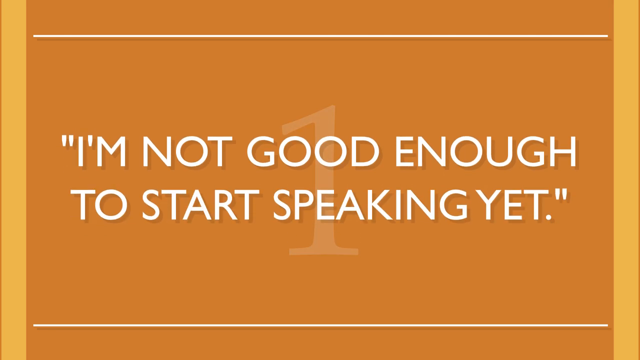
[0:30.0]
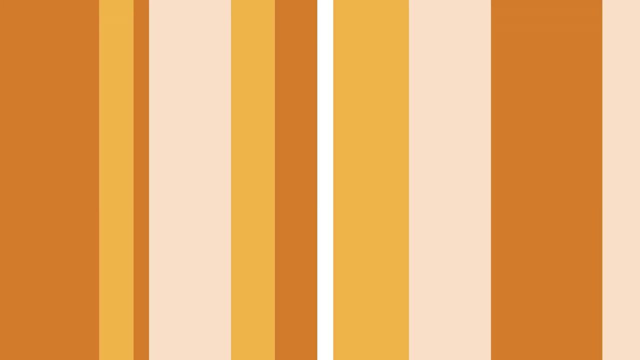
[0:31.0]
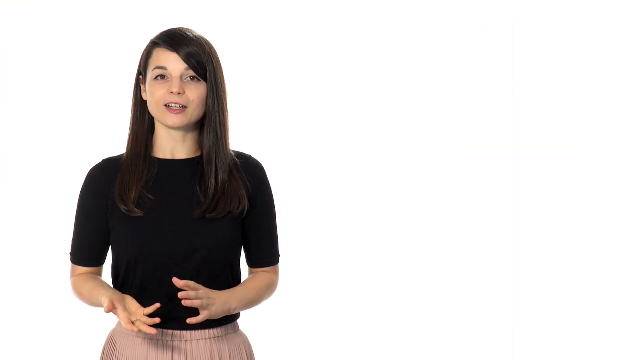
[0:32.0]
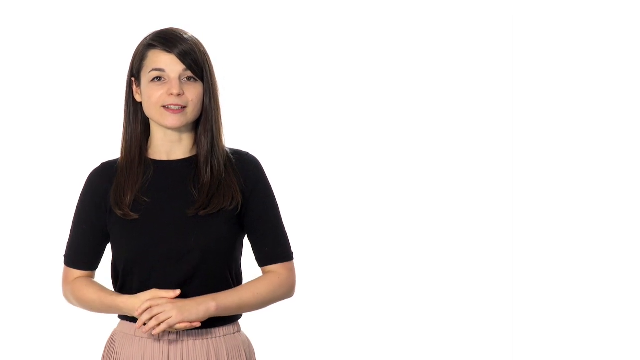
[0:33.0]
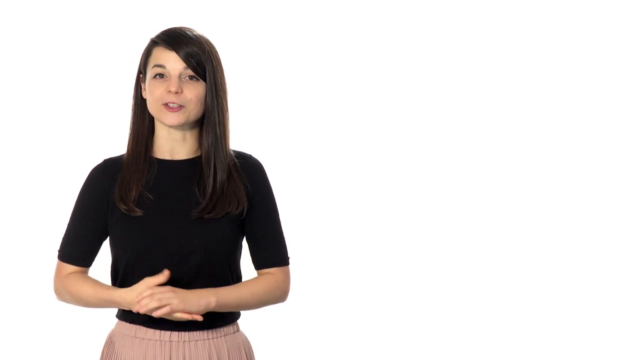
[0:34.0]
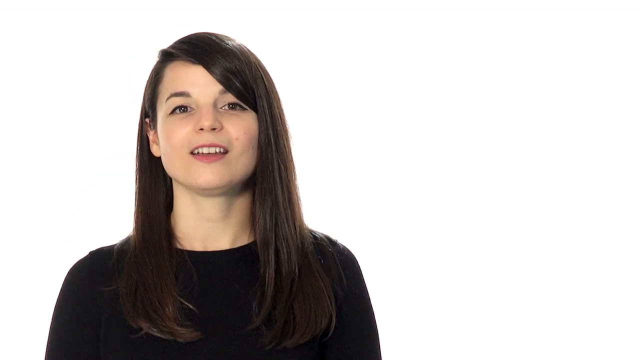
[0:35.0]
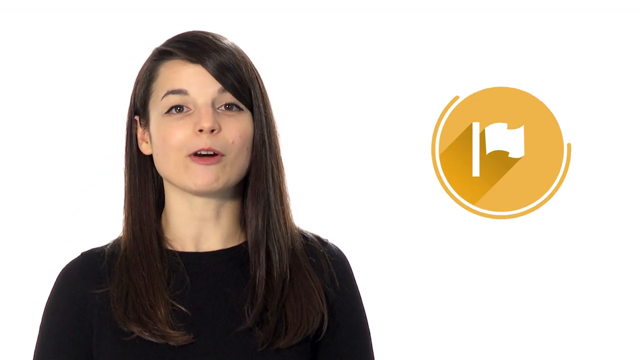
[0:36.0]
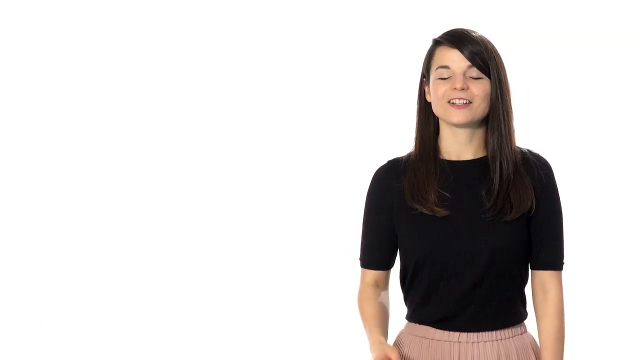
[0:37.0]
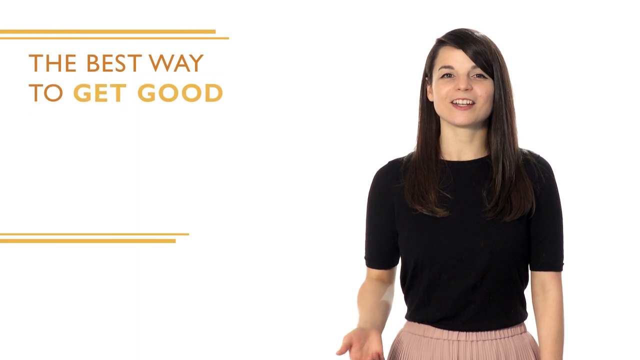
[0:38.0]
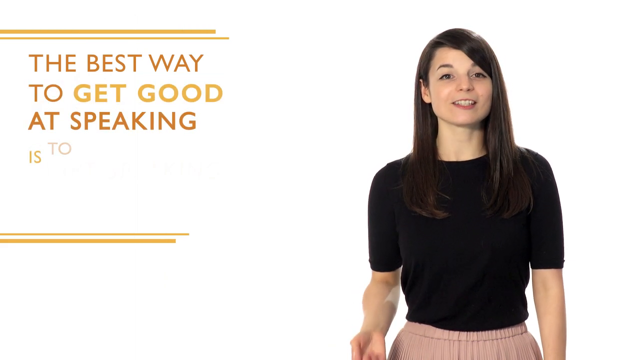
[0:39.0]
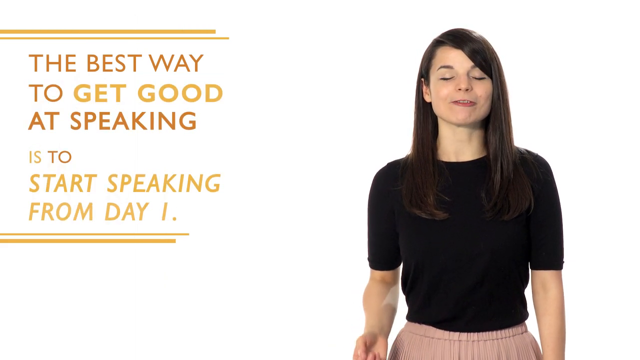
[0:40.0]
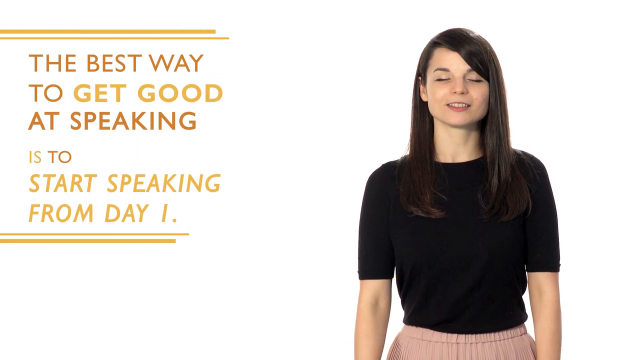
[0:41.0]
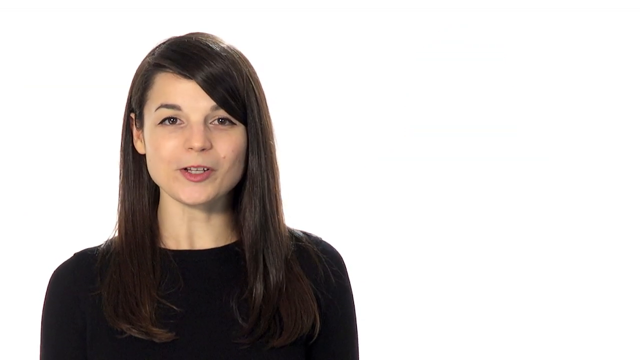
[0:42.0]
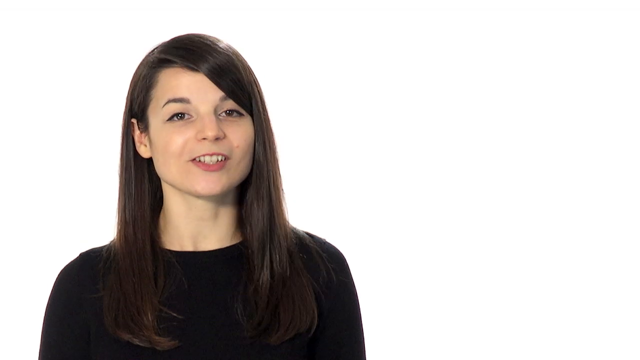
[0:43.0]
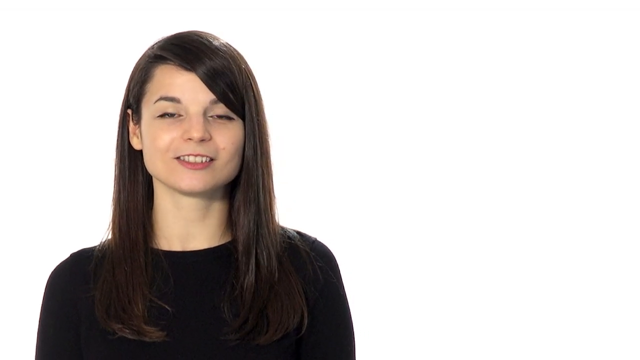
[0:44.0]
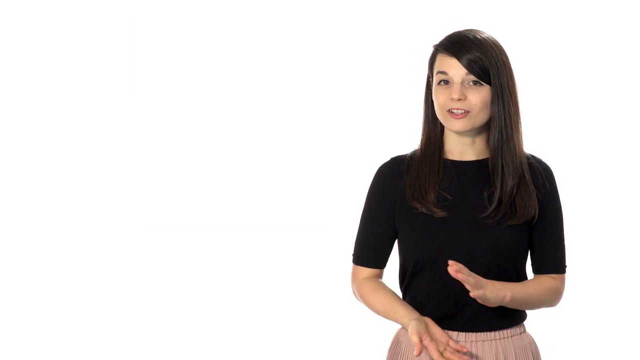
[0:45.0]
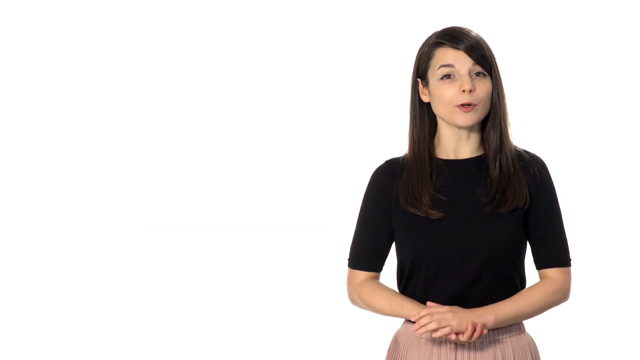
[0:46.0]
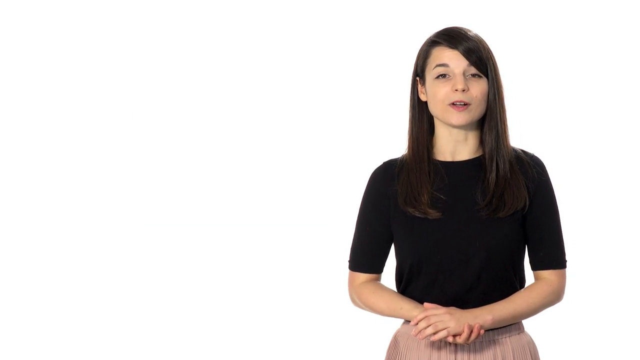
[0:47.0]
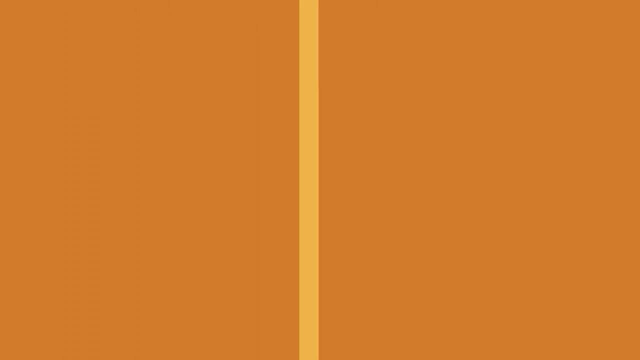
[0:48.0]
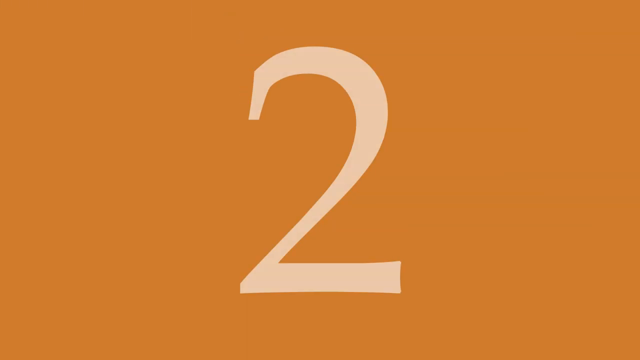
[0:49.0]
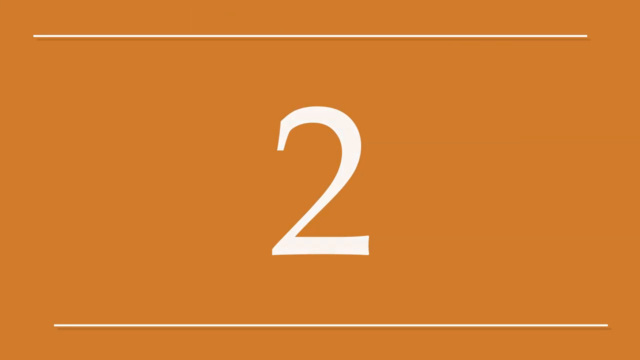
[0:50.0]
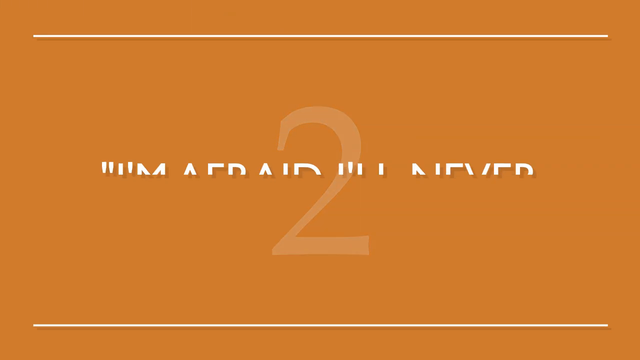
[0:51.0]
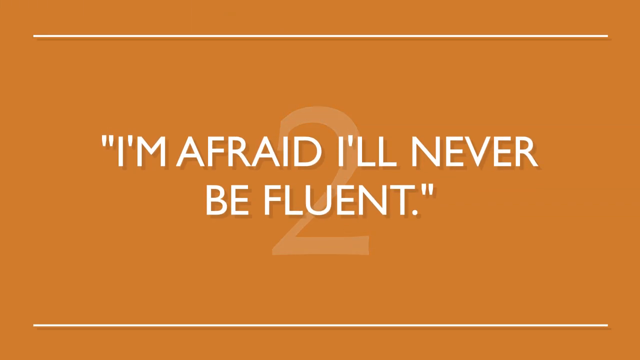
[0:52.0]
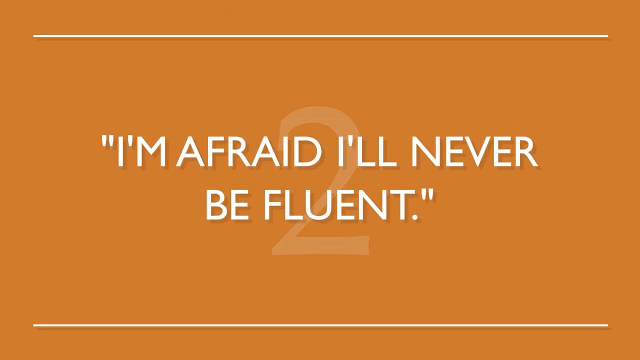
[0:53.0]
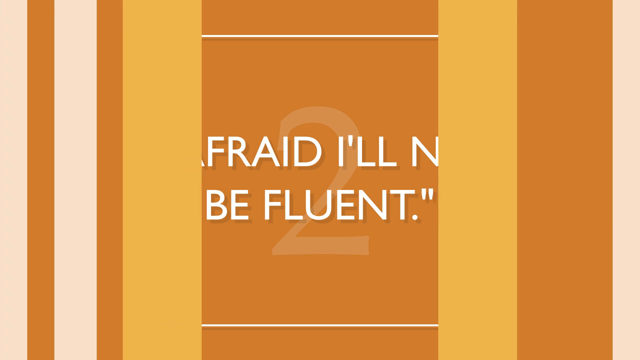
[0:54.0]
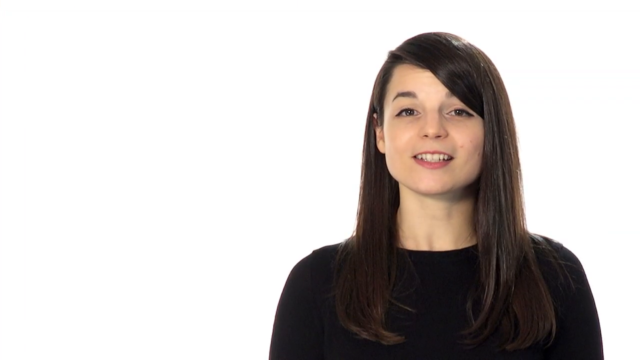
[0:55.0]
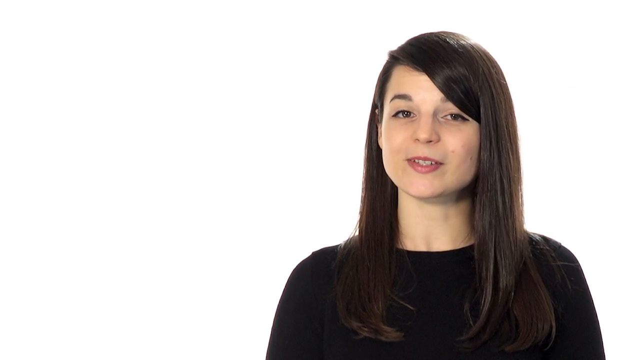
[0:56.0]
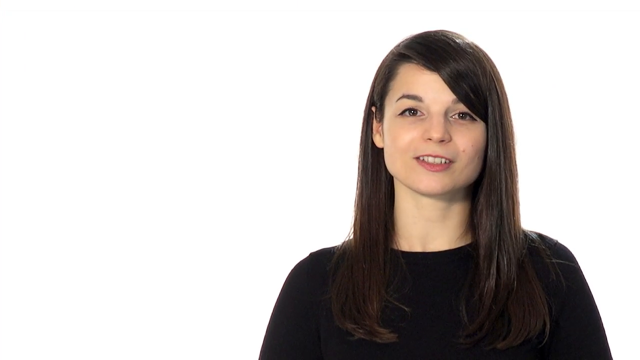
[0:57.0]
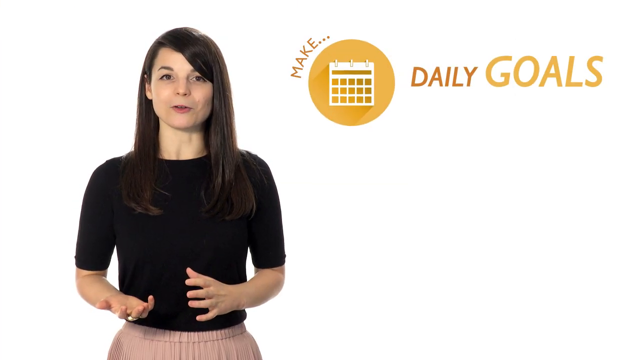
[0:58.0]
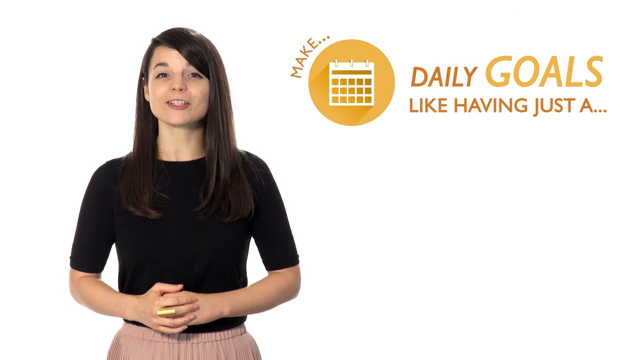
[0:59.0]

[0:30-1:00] An orange transition covers the quote and gives way to the white screen again, with the woman speaking on the left side. She makes small hand gestures before the camera zooms in to a close-up of her face and shoulder. Beside her on the right, a circle appears with a white flag in the center, and an animated line travels around the circle. The shot switches to the woman on the right against a white background, talking to the camera as orange-shaded text appears on the left: "the best way to get good at speaking is to start speaking from day 1." The video switches back to the close-up of her on the left speaking to the camera, then to her on the right side at normal distance. An orange transition sweeps over the screen, changing to a dark orange background with the number 2, and the quote "I'm afraid I'll never be fluent" appears in white on top of the 2. The screen transitions smoothly back to the white screen with the woman speaking on the right side. It then cuts to the woman on the left side of the white screen as text appears on the right: "make daily goals like having just a 5-minute conversation," along with an orange-yellow circle with a calendar inside and a circle with a speech bubble inside.